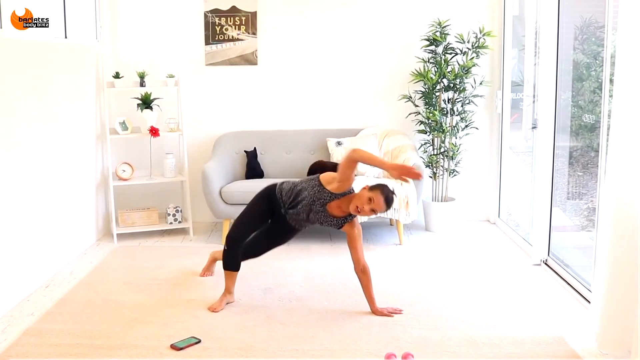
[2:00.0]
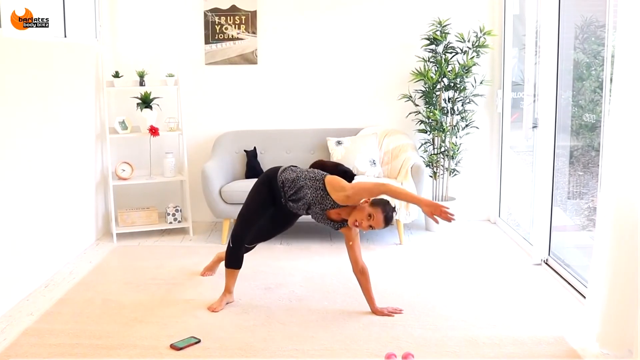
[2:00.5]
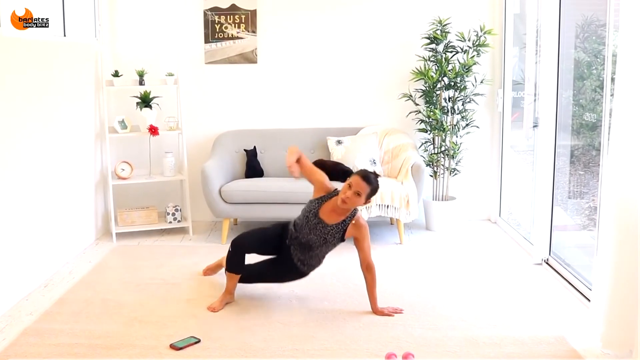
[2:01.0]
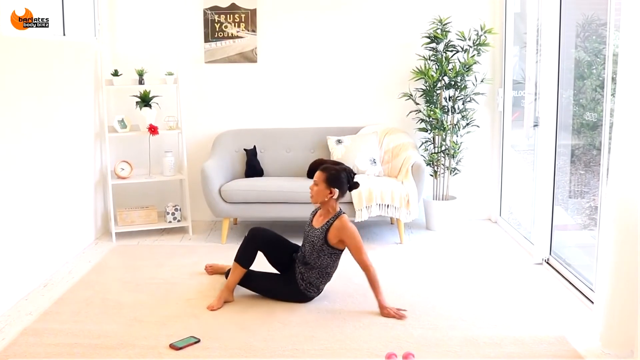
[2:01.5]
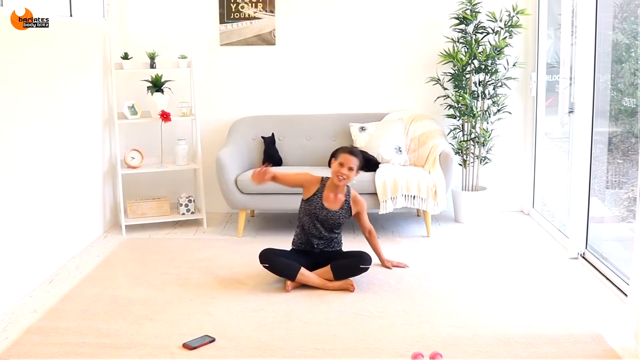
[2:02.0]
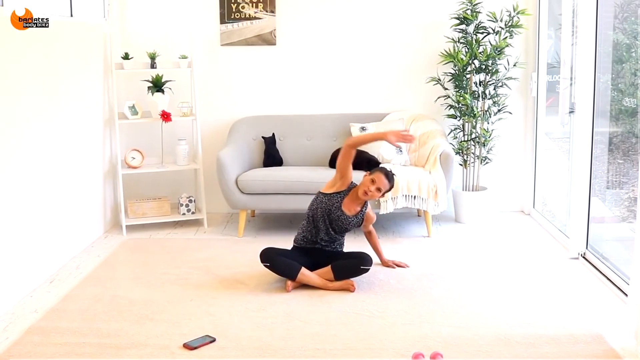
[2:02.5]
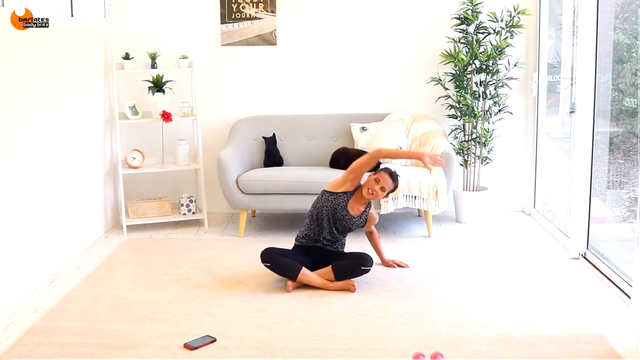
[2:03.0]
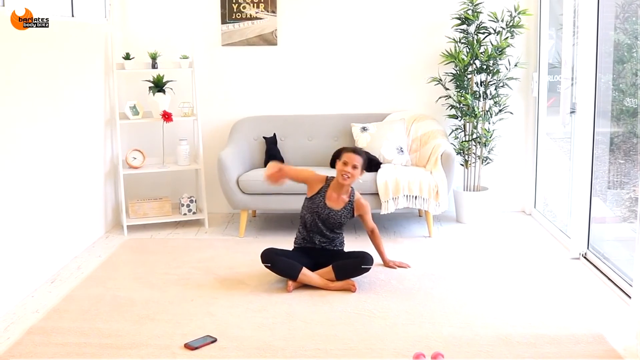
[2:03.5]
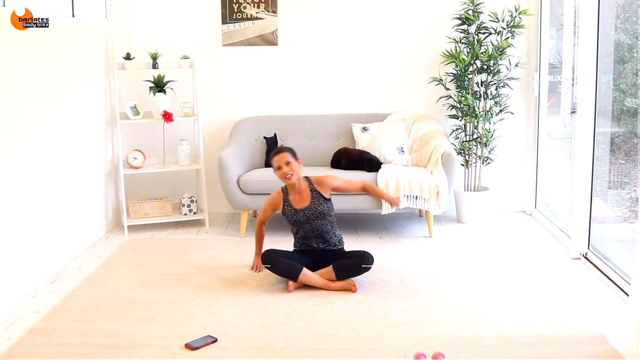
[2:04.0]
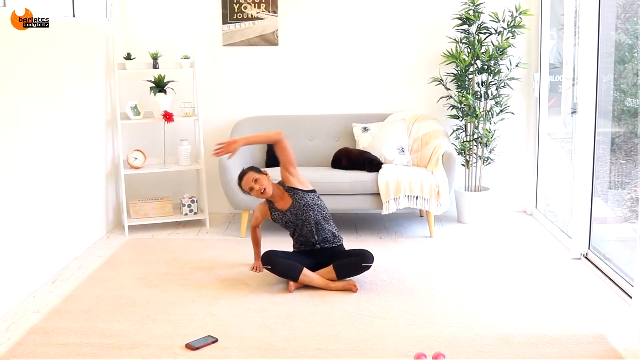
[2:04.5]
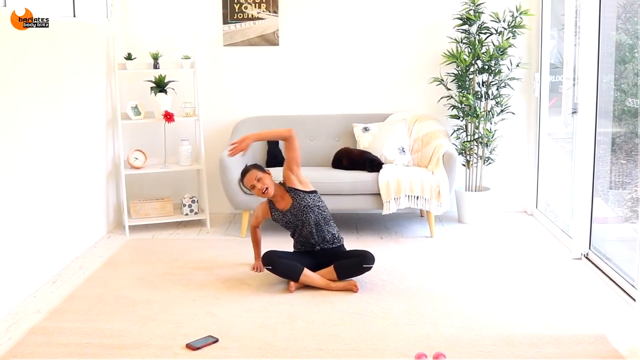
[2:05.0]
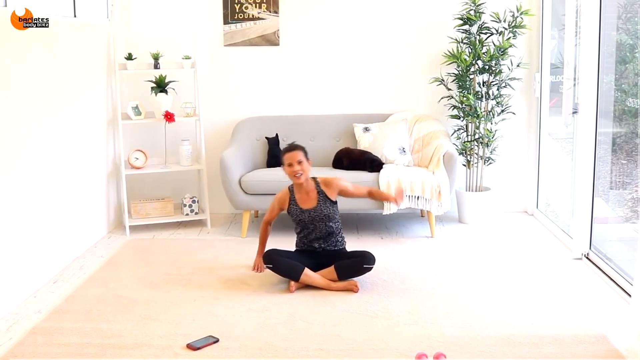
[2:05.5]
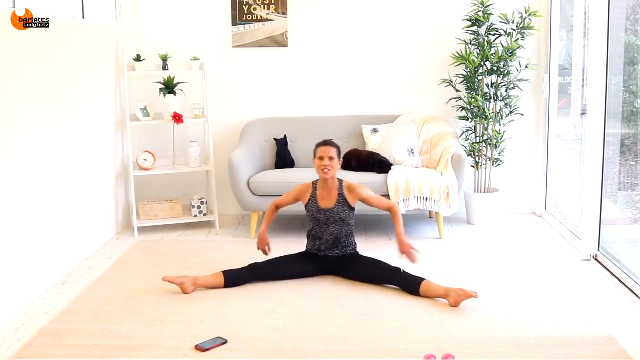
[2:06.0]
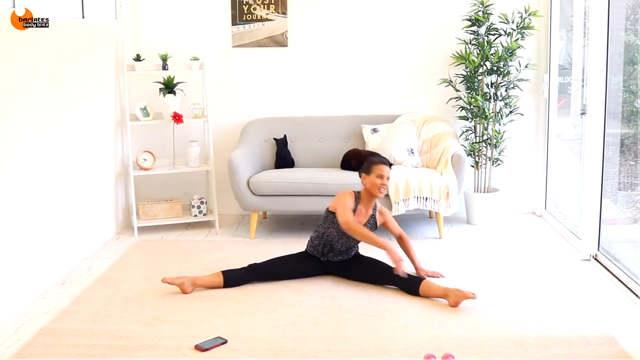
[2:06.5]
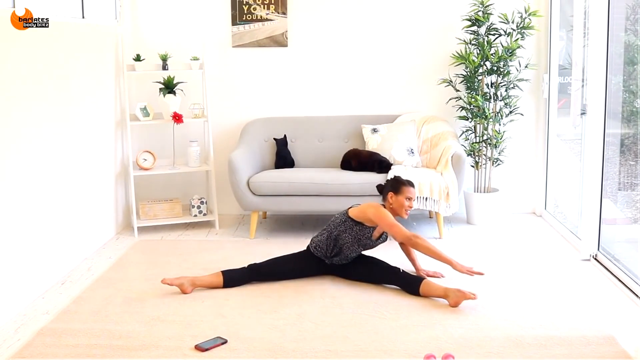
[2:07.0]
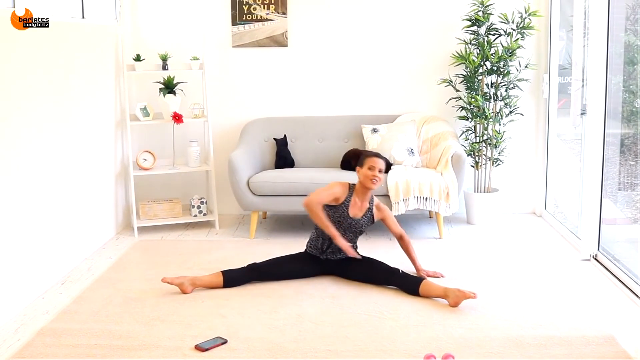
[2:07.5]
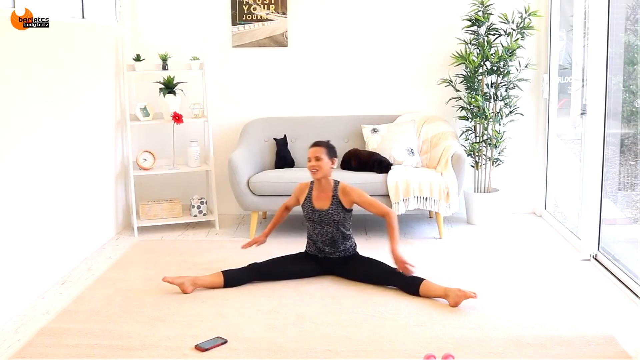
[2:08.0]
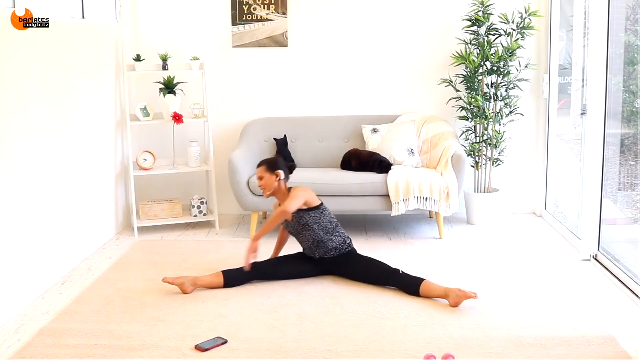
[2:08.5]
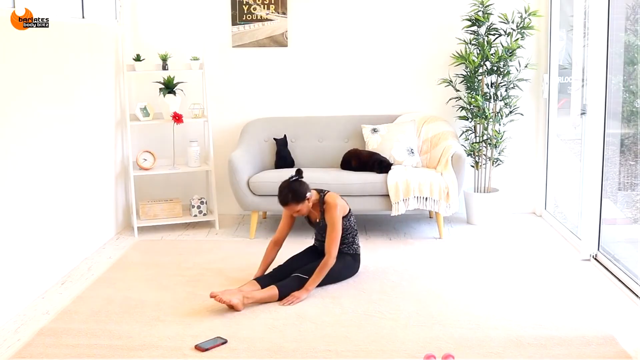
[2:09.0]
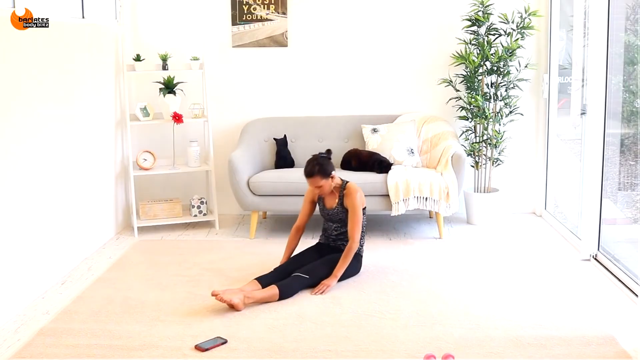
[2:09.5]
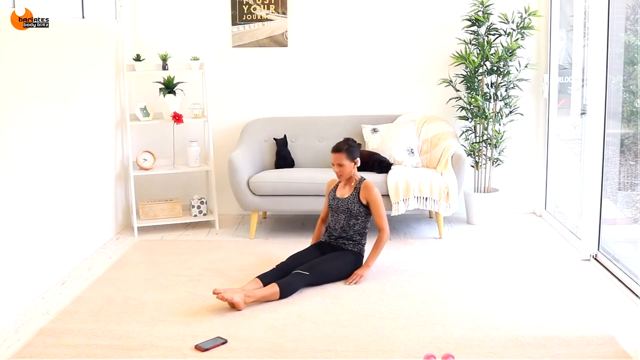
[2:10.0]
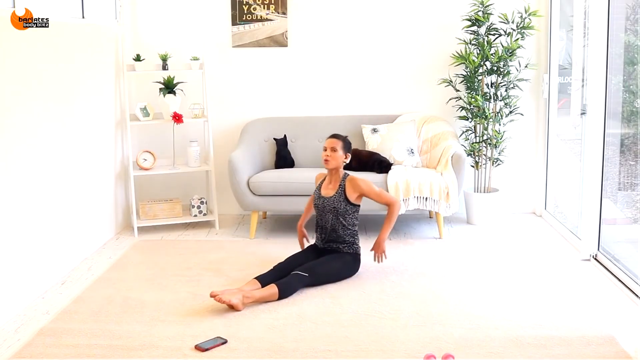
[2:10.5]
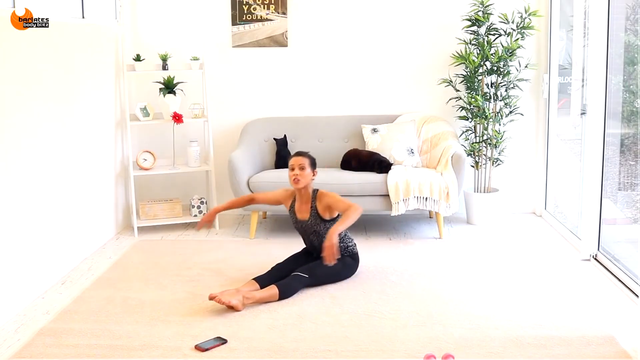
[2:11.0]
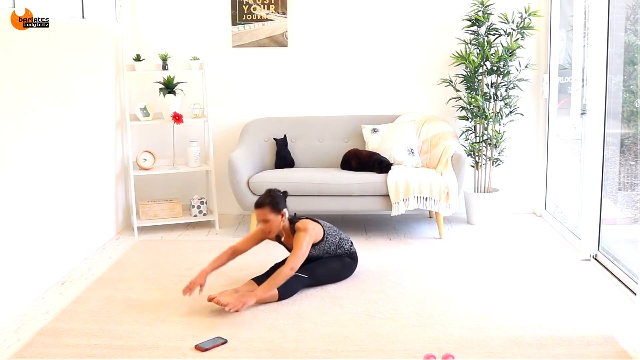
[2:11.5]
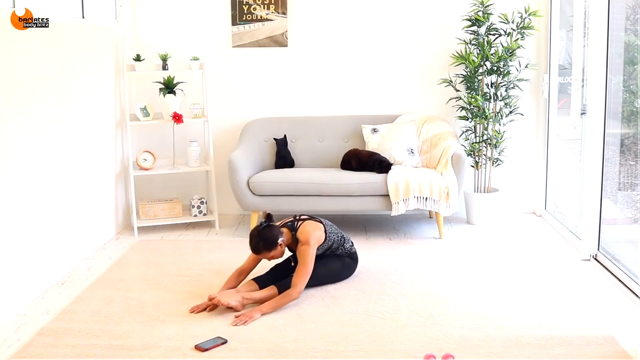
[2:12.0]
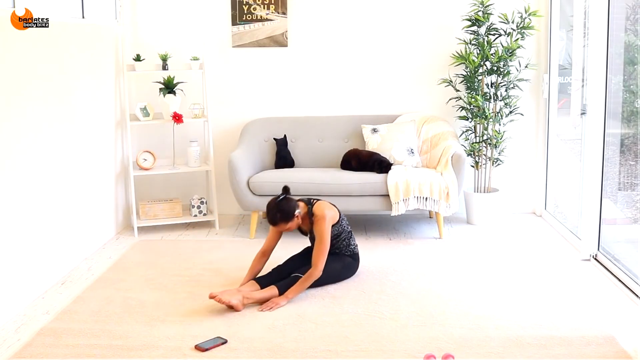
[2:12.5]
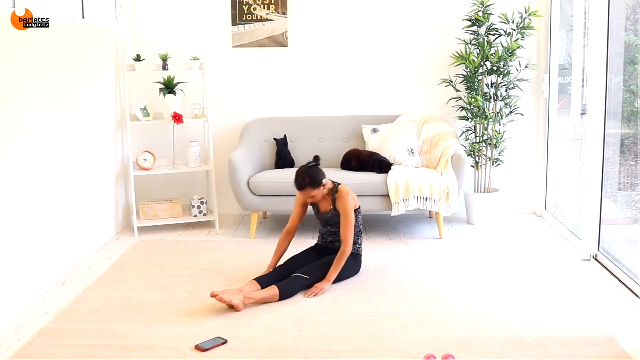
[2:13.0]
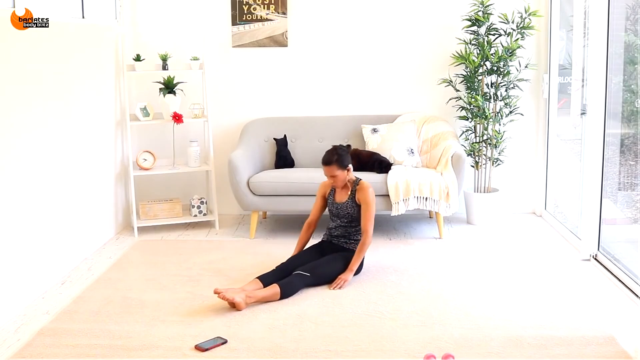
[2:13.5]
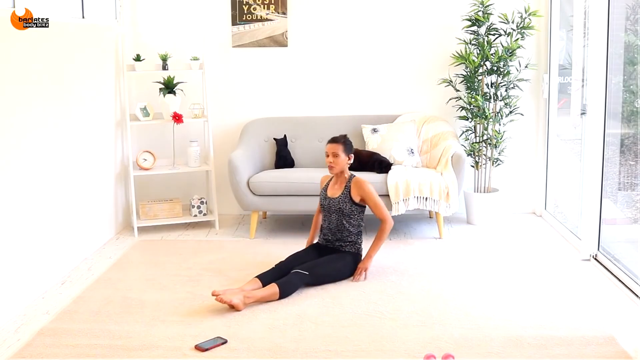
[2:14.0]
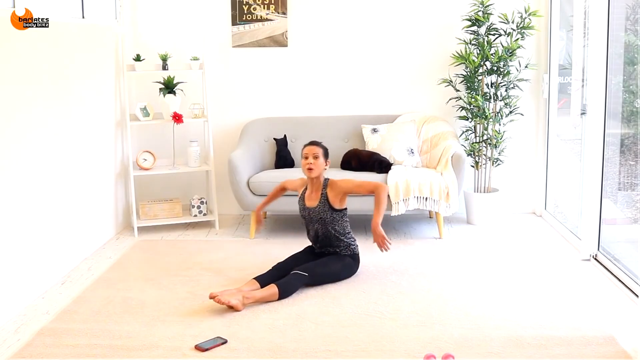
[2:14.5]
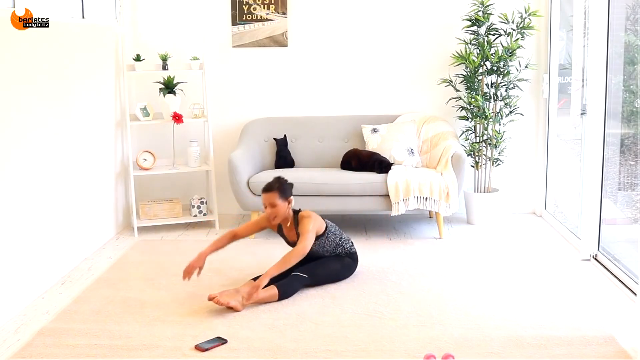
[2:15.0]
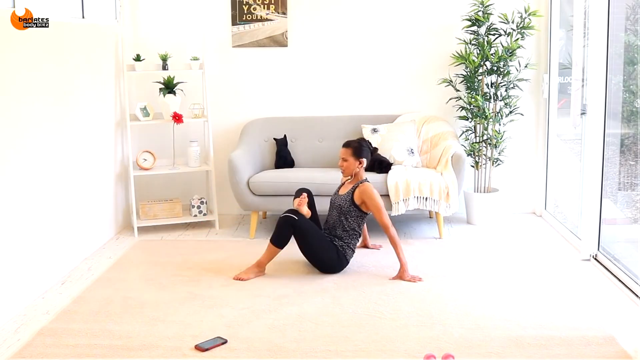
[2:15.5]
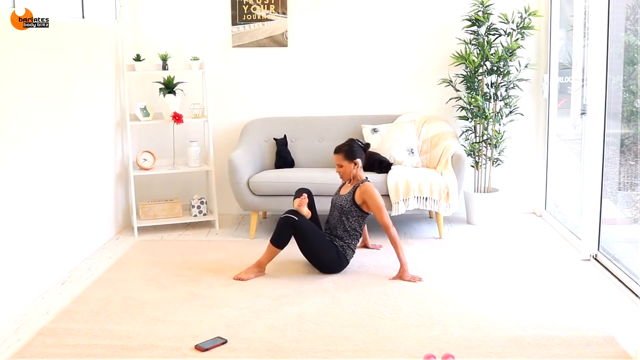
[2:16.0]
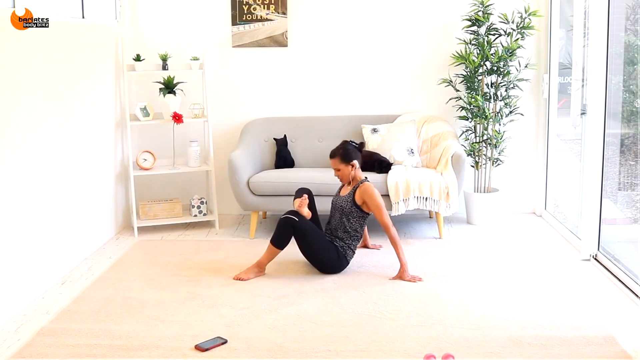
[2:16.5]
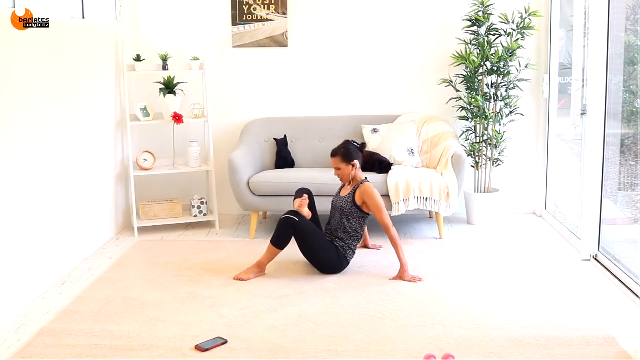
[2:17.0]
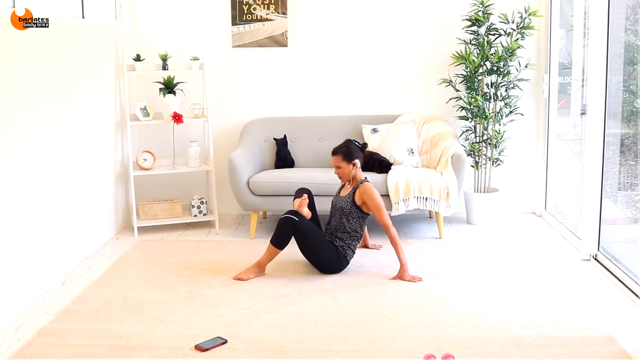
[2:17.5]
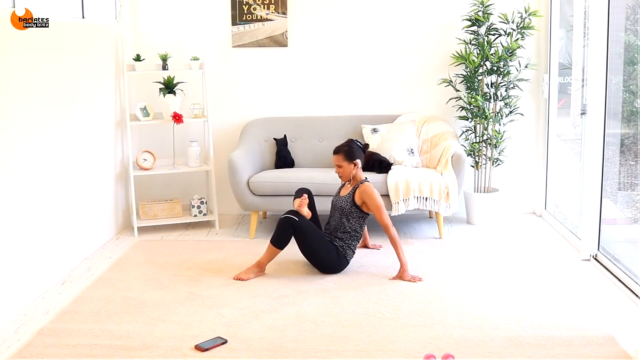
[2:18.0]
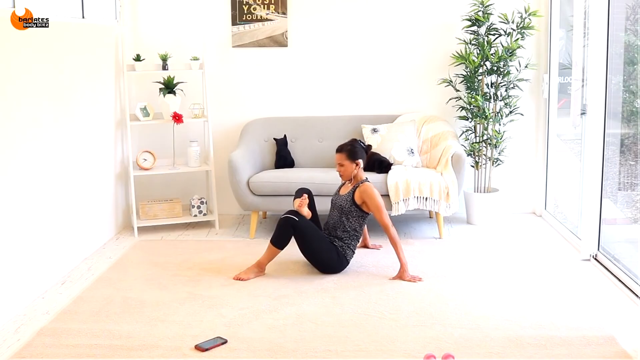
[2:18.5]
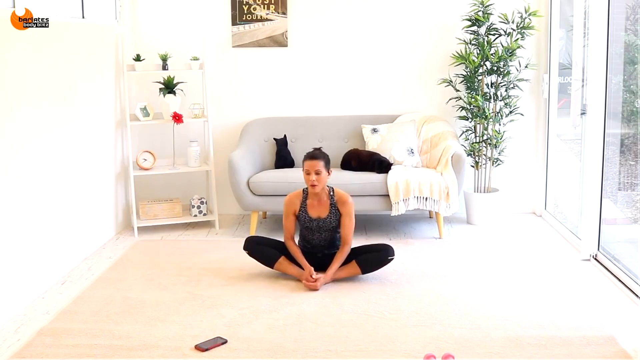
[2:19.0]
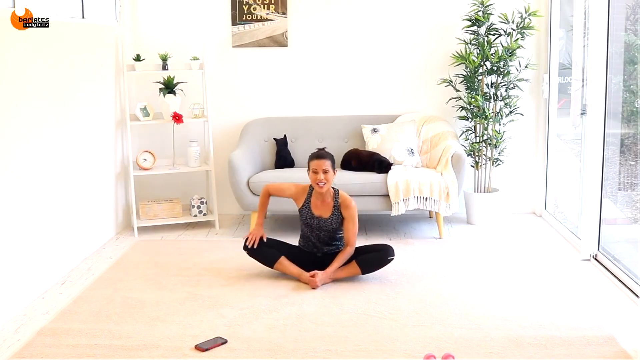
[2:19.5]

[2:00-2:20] The woman does one final side plank, kicking her leg up. She then sits cross-legged on the floor and alternates stretches, putting one arm straight on the ground and bringing the other up over her head and bending. She does a couple on each side, then sits with her legs open in a straddle position with her toes pointed, alternately reaching the opposite arm toward each toe. Next she moves her legs together, toes still pointed, bends forward and slides her hands along the carpet, doing a few of these. Finally she sits in a butterfly position and bends her neck and upper back forward and then up toward the ceiling a couple of times.